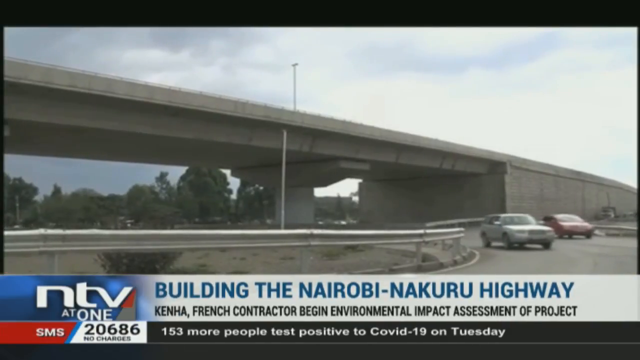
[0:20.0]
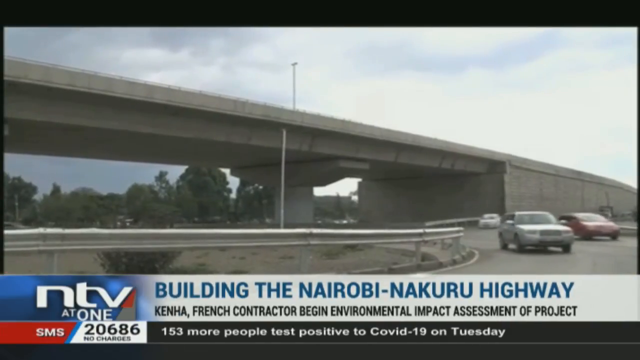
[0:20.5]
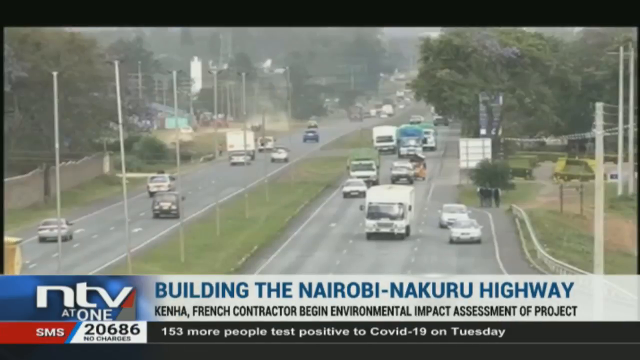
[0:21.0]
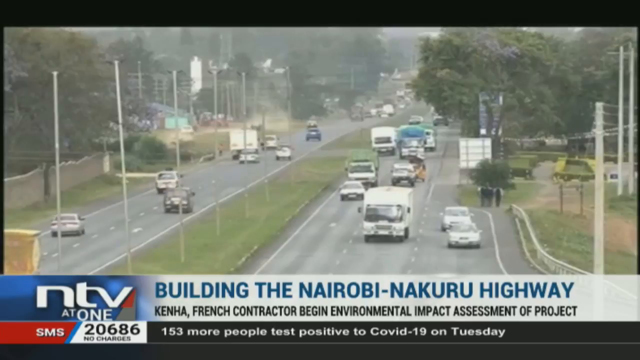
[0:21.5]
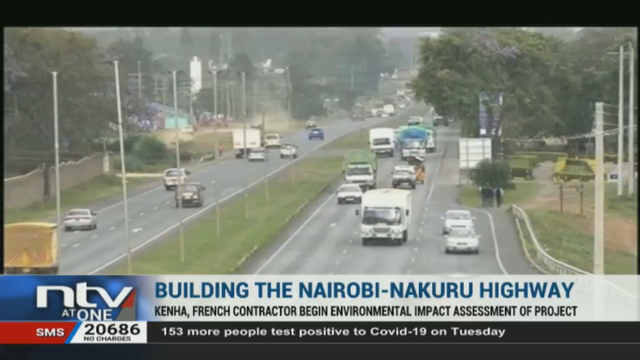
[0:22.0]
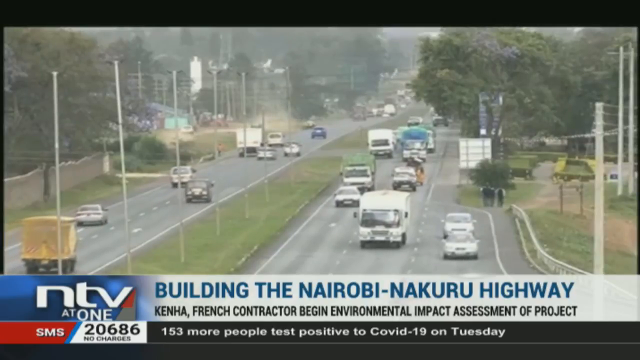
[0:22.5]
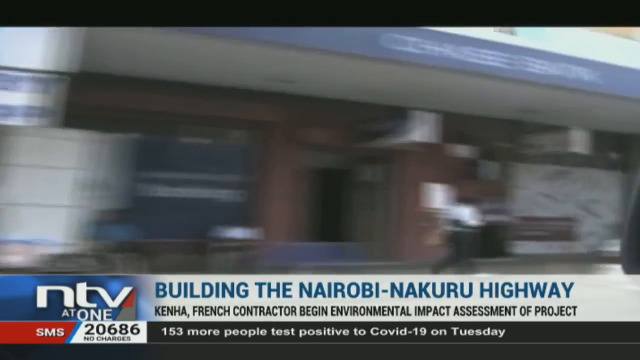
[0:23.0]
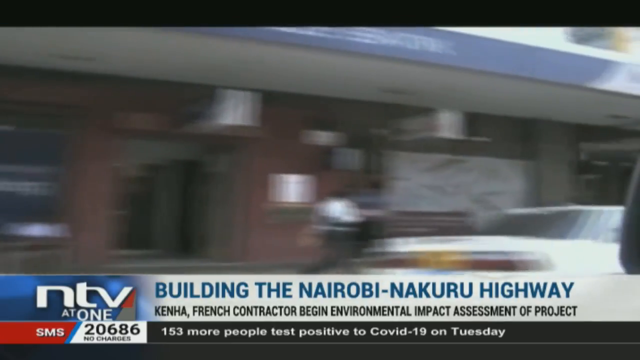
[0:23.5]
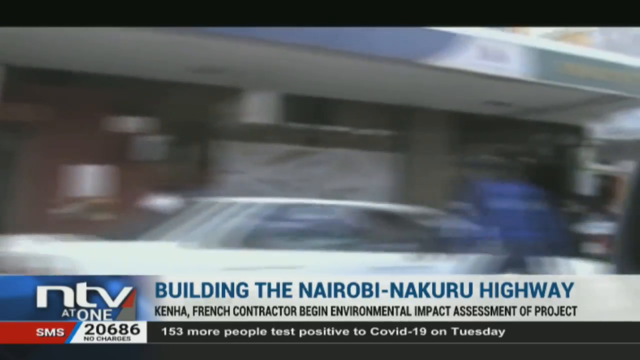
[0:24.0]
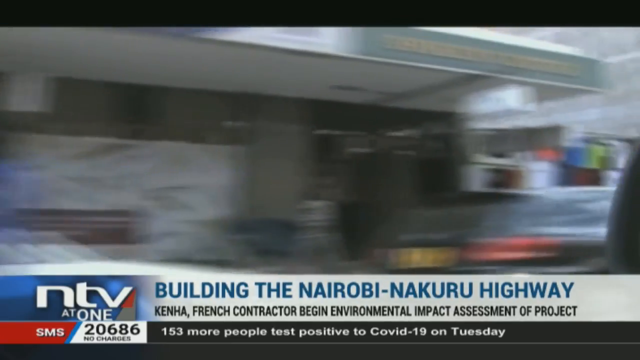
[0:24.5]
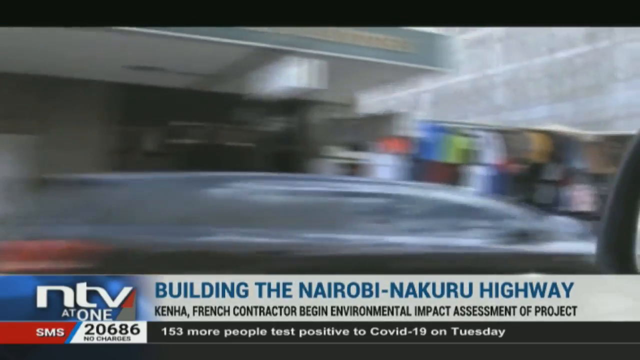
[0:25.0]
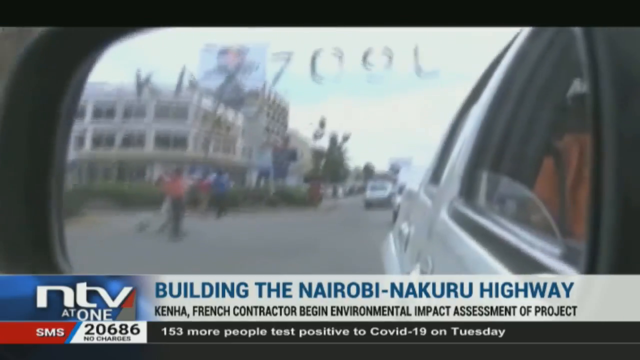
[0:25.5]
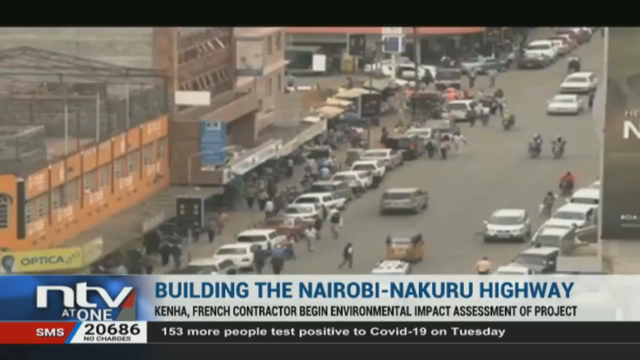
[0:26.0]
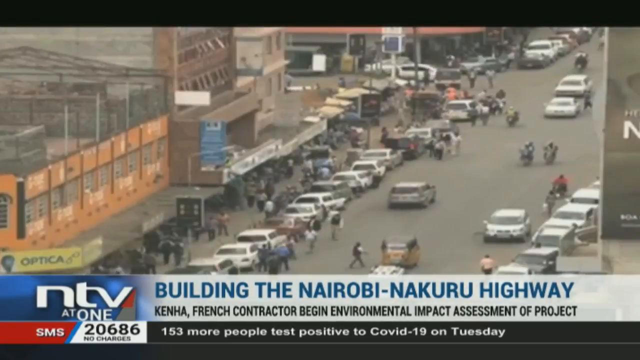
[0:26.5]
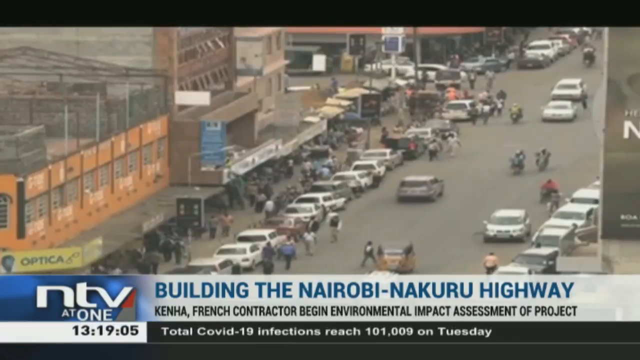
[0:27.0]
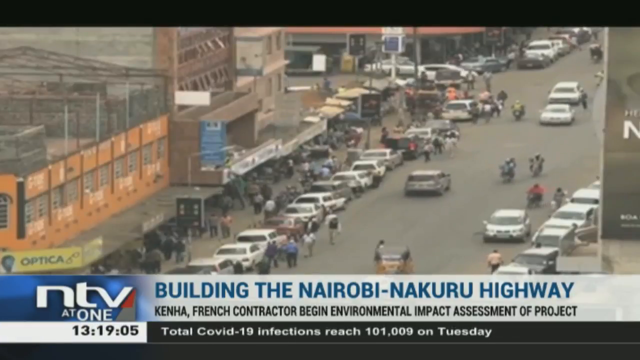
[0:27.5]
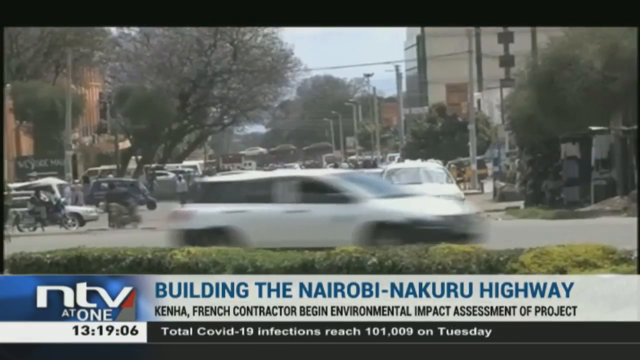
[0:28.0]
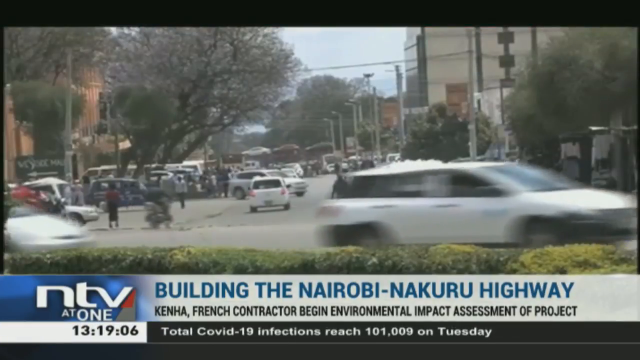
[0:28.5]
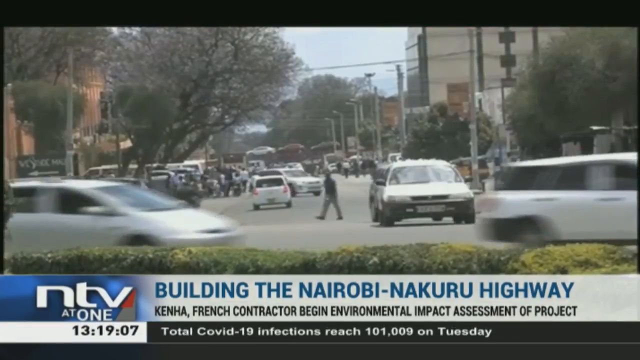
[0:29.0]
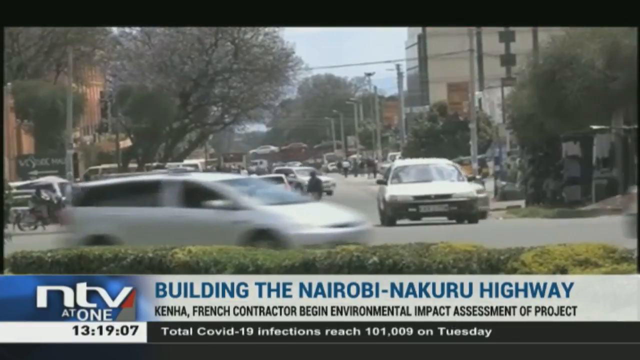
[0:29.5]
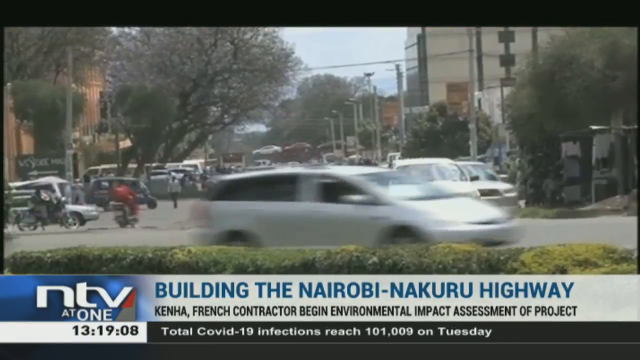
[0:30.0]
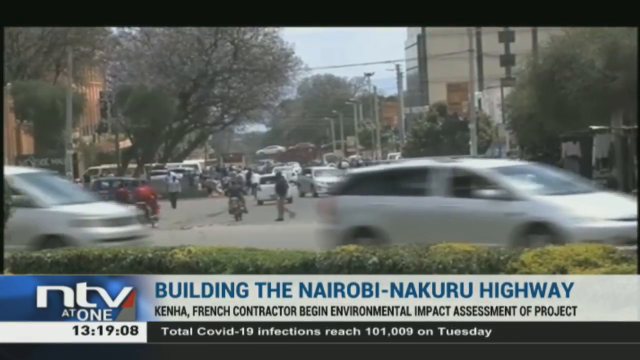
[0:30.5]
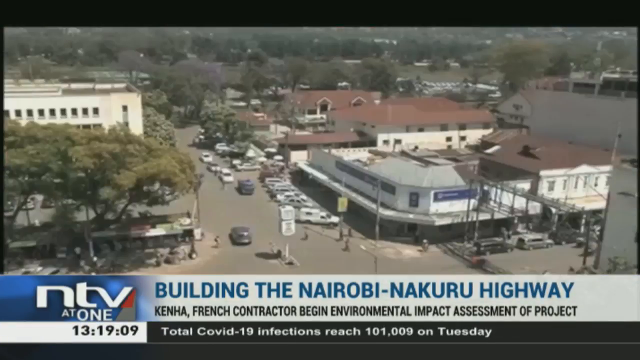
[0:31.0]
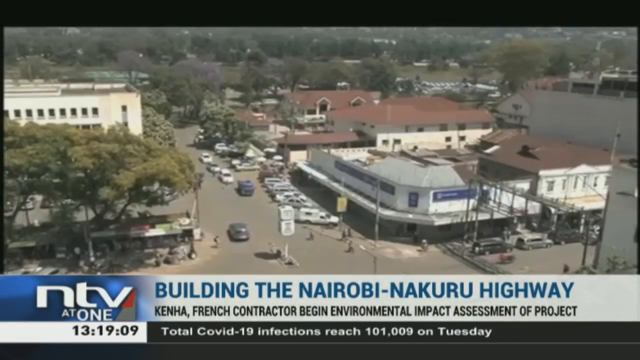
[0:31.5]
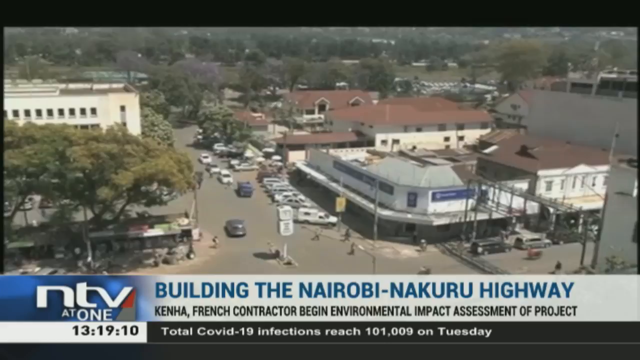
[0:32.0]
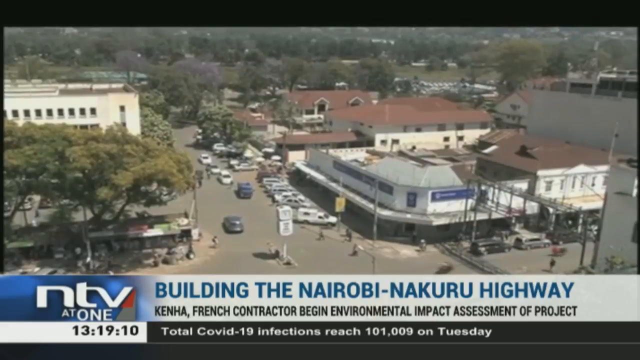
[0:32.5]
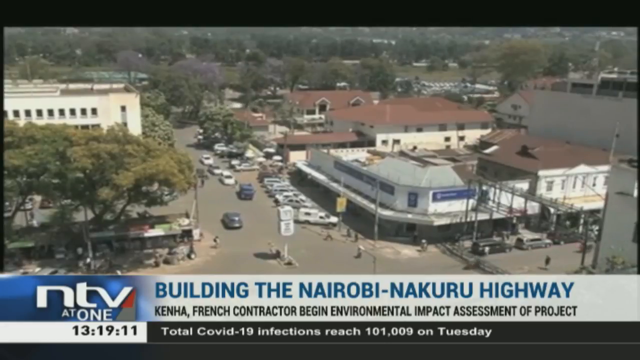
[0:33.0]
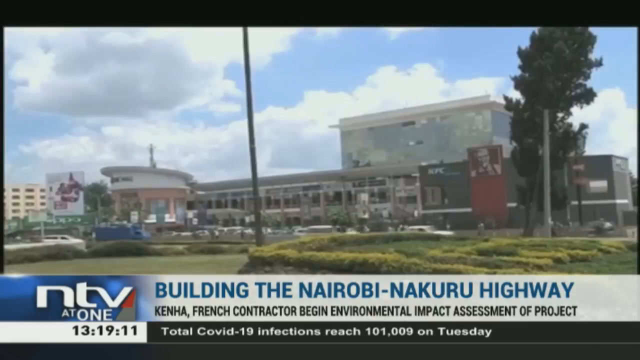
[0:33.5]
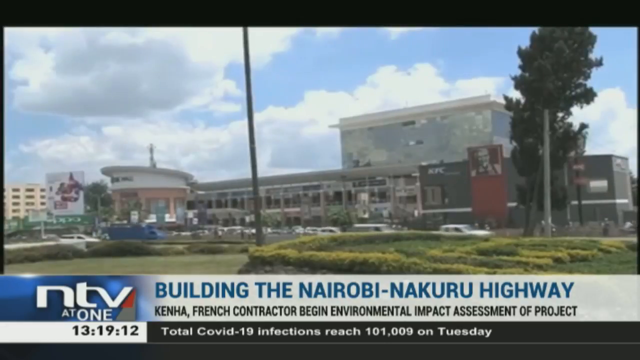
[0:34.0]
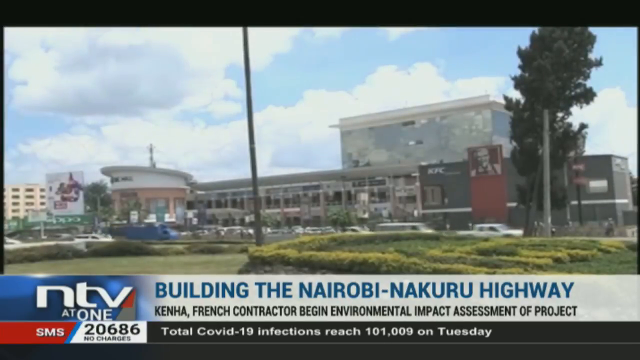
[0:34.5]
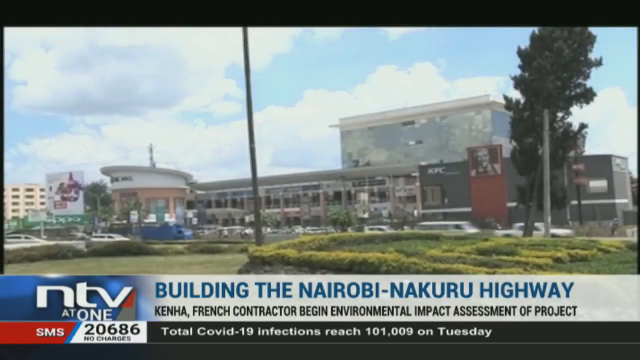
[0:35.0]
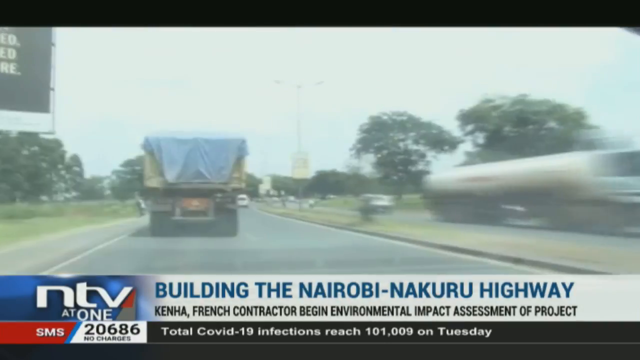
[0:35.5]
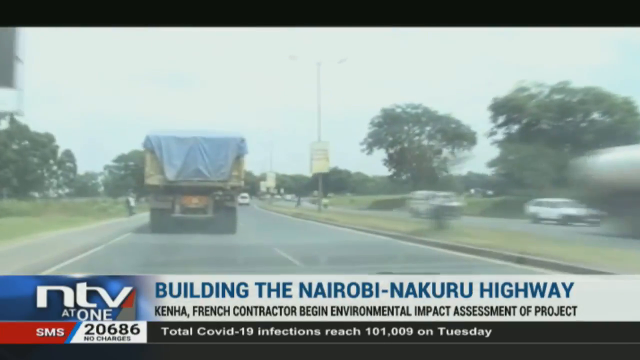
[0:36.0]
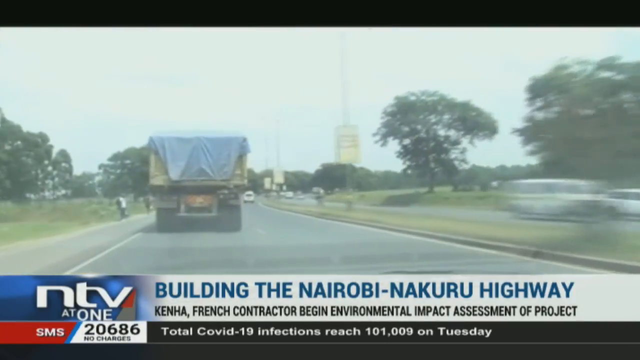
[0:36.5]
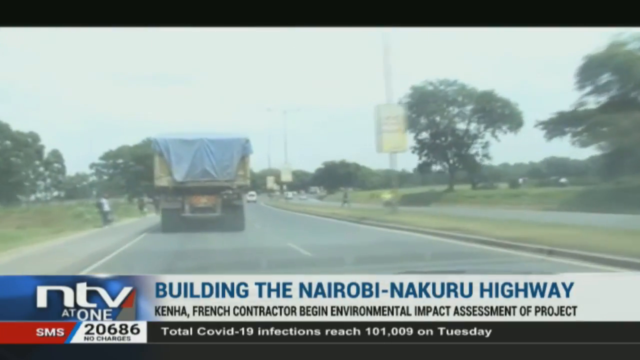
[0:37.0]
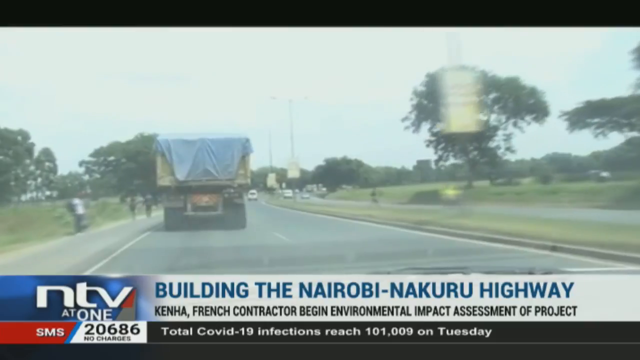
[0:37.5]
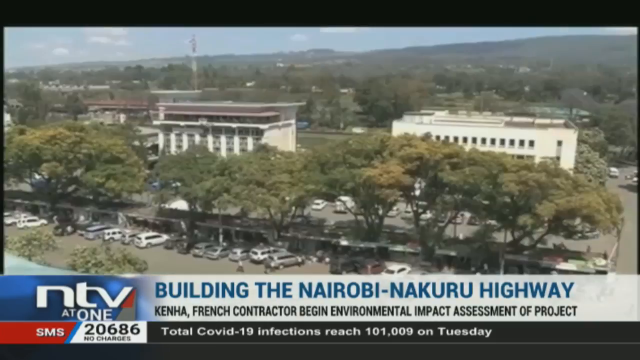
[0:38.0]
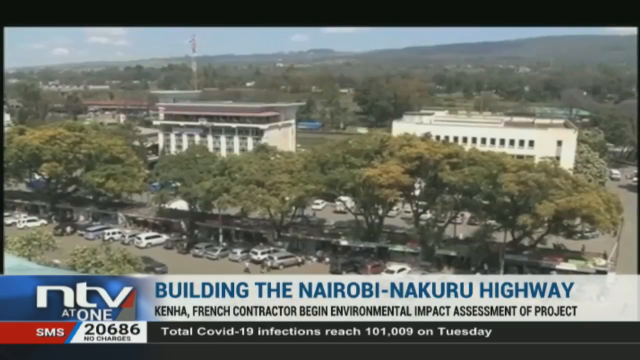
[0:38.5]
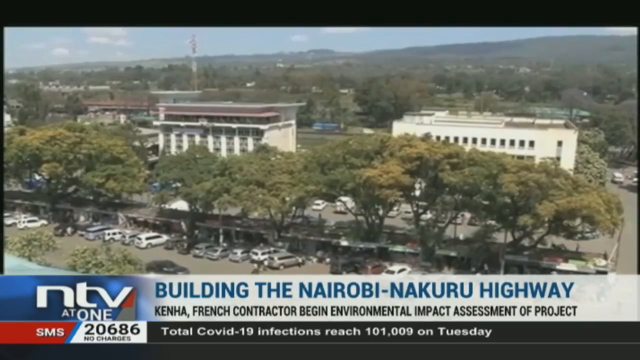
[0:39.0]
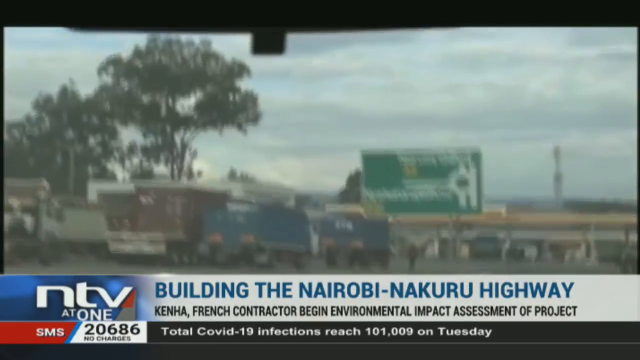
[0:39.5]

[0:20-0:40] More imagery shows the highway, with traffic moving on the left rather than the right. The text below says "building the Nairobi-Nakuru highway," and below that "French contractor began environmental impact assessment." A city area appears with many people walking on the sidewalk and light-colored or white cars parked on the sides of the road. A business sign is visible to the left; at the far bottom left it says "Optica," with a pair of stylized eyeglasses to the right of that. Another shot shows a street from a different vantage point, with not much traffic moving along. Another city or town image shows what seems to be a KFC, with a picture of Colonel Sanders. A more rural shot shows a highway moving along an undeveloped area, and another image appears after that.